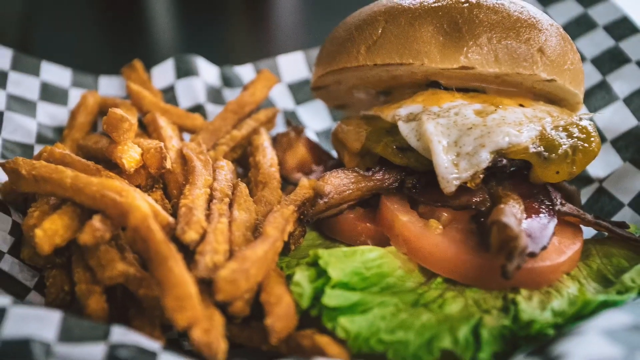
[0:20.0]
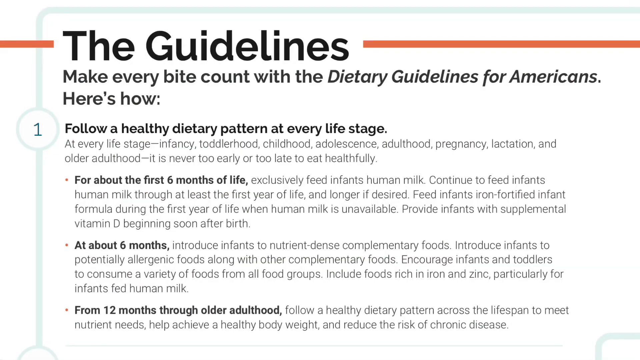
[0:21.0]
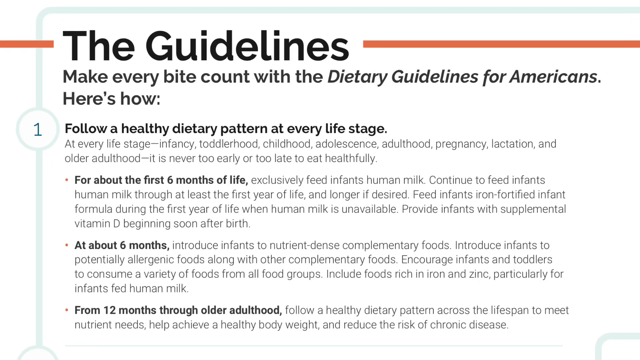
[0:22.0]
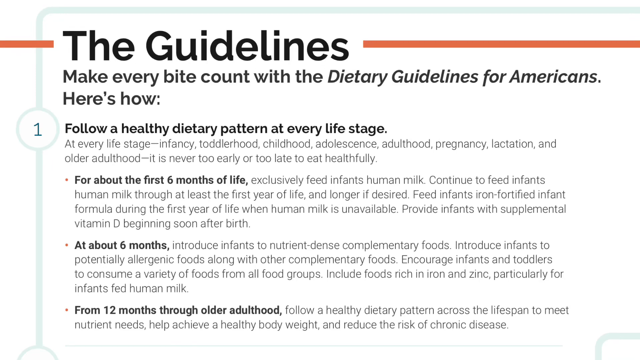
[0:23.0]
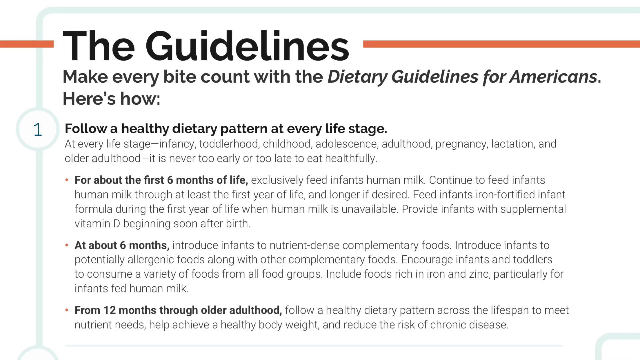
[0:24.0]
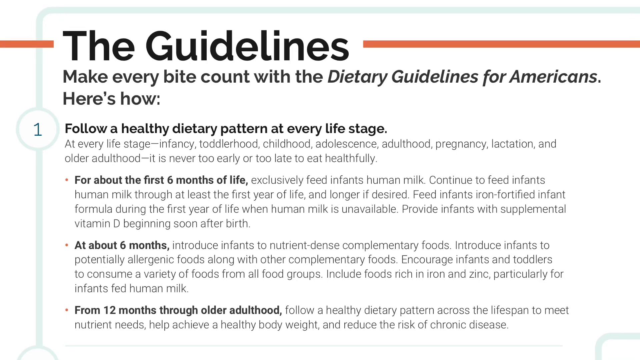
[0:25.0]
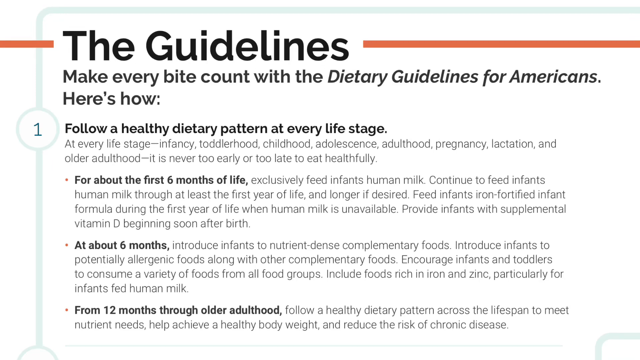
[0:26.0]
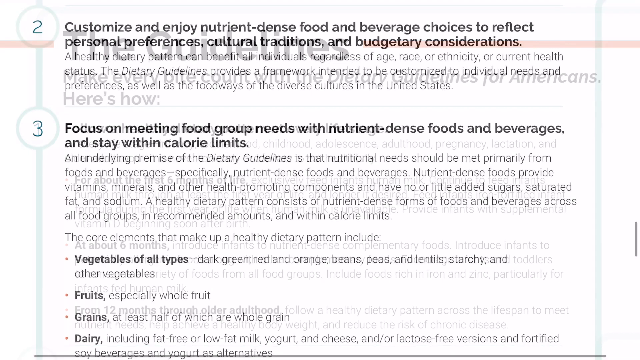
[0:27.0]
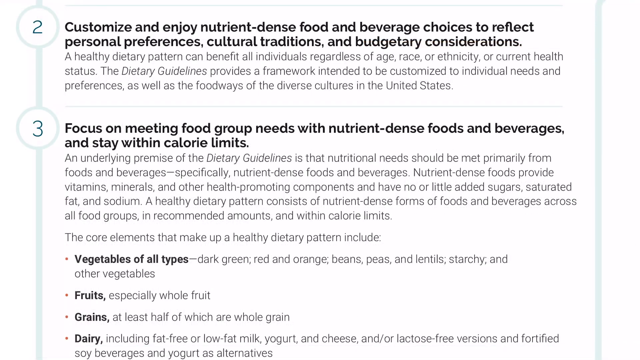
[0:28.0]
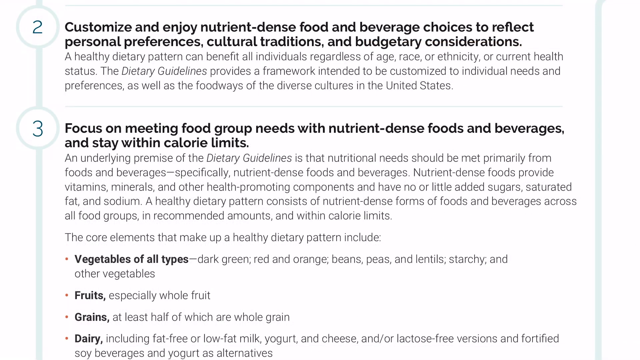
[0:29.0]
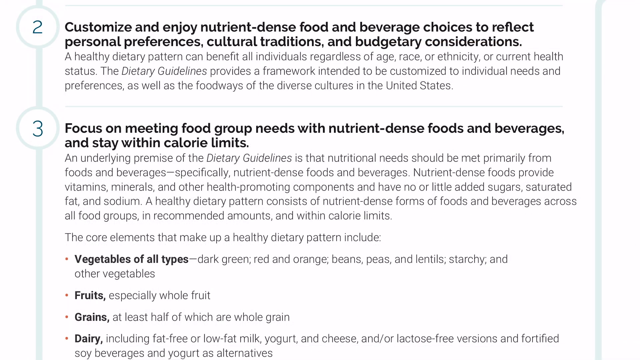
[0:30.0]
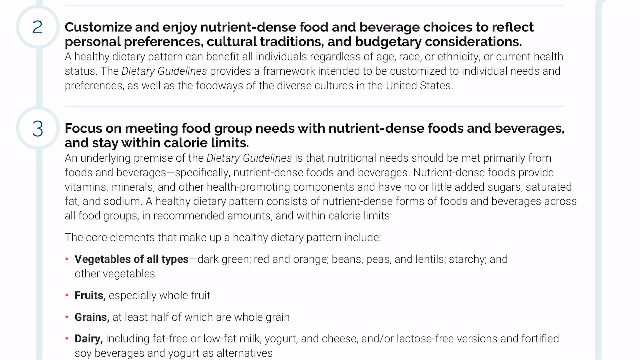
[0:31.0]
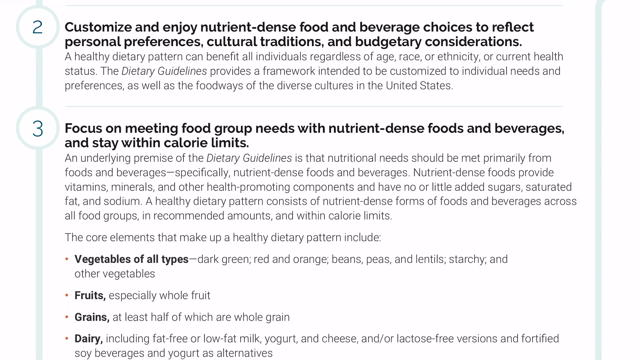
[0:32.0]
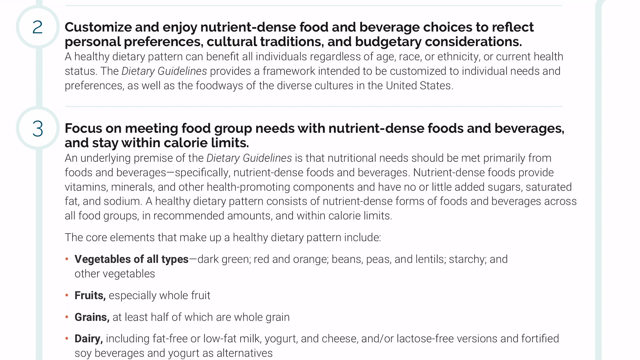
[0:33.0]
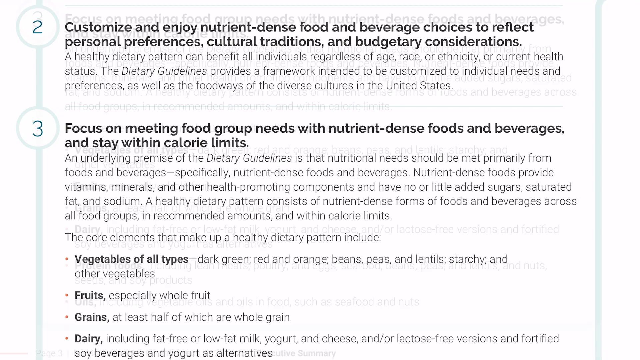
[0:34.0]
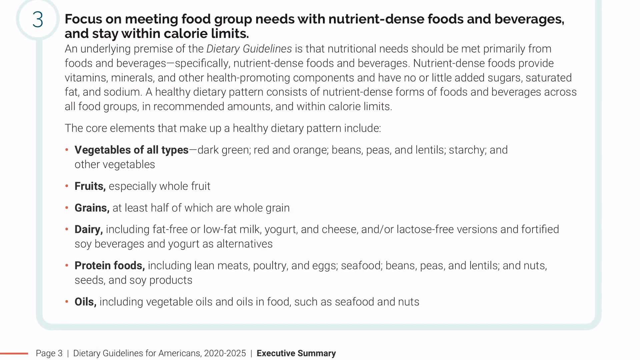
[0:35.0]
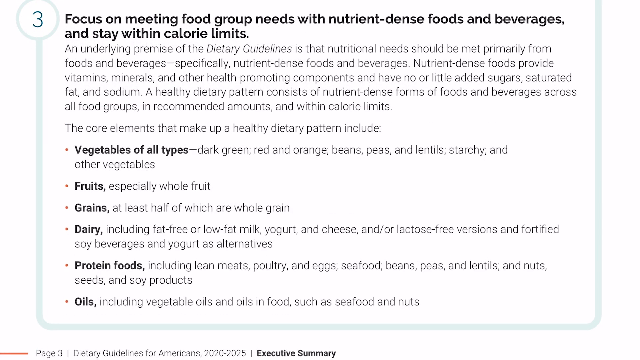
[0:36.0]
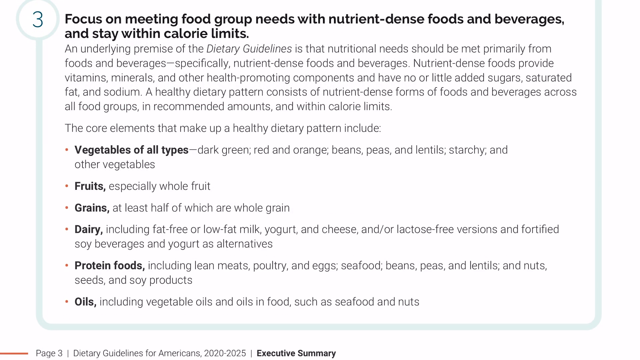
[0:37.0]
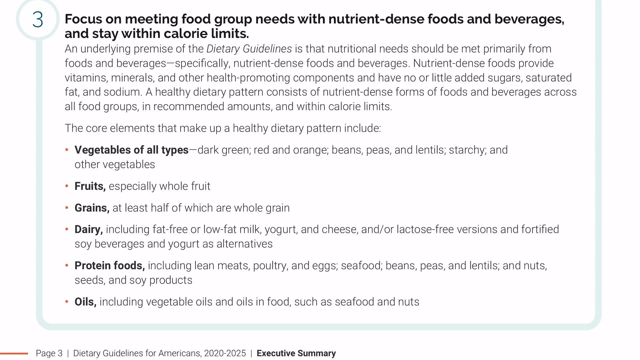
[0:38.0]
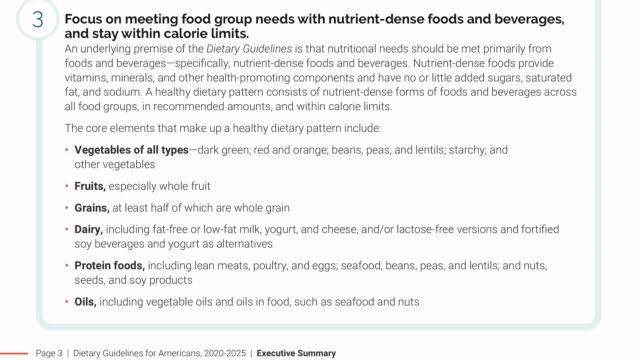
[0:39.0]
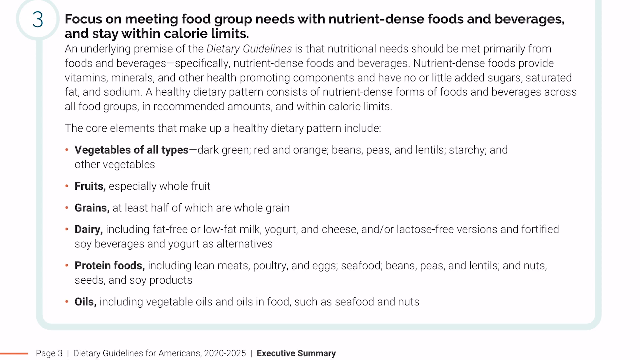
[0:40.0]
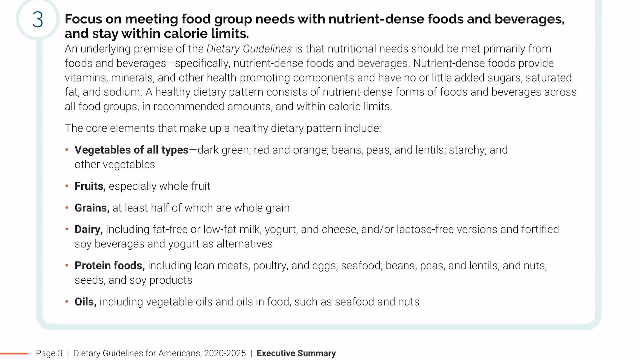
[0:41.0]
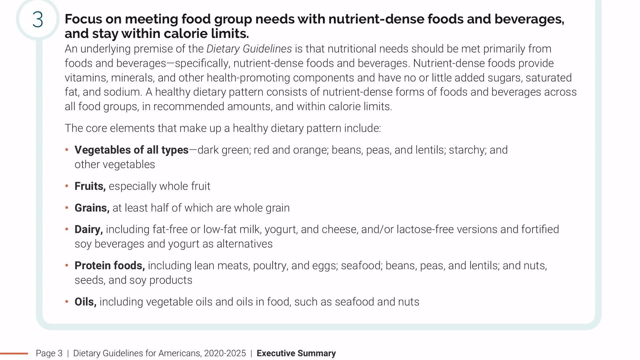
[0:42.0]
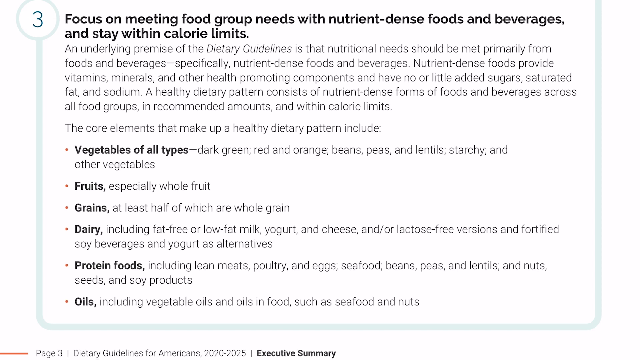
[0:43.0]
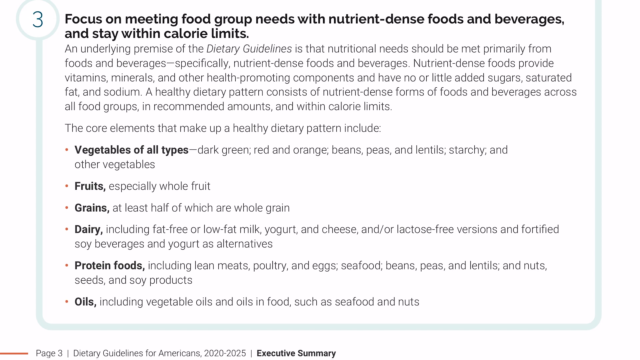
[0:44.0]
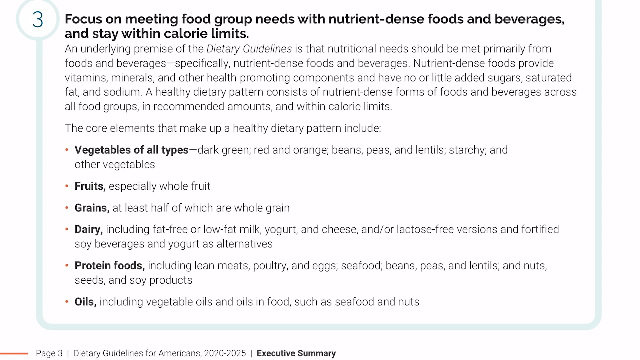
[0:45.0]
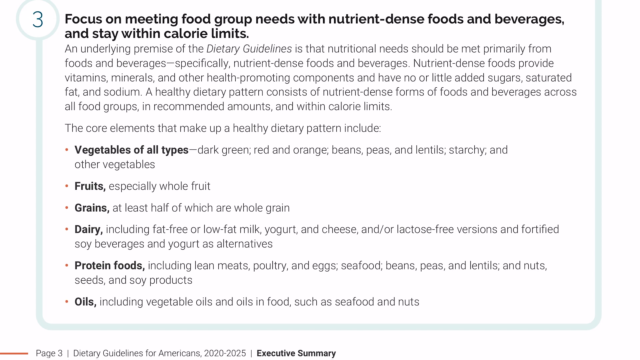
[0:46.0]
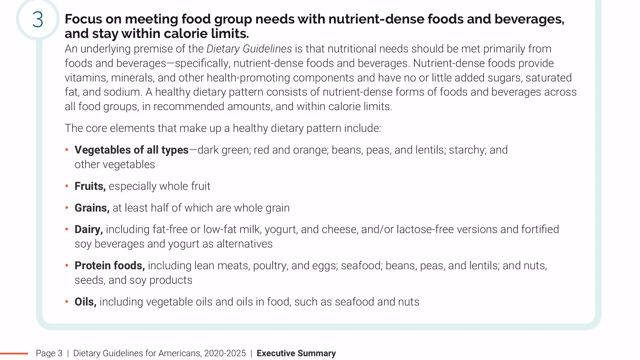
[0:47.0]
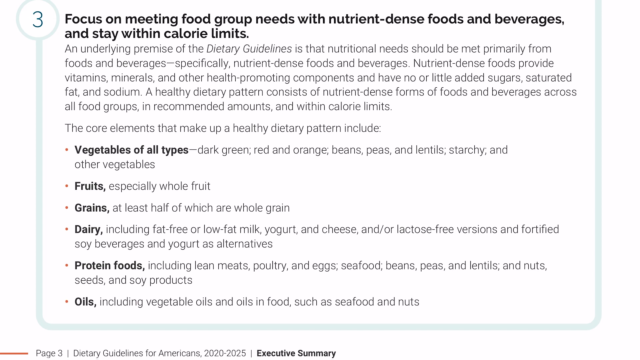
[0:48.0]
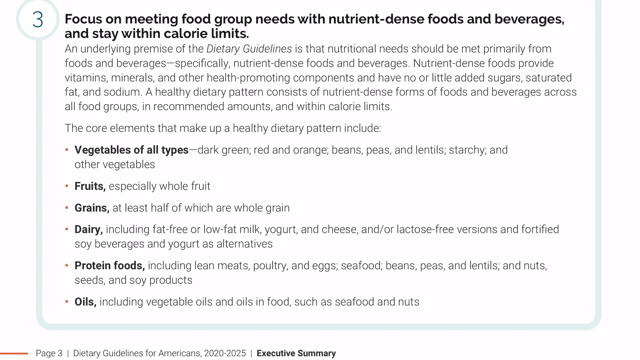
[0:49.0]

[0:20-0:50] A picture shows a large restaurant hamburger with lettuce, pickles, tomato and bacon; there is so much on the bun that the hamburger patty itself cannot be seen, and seasoned fries are next to the burger. The video then shows the guidelines, beginning with "Make every bite count with the dietary guidelines for Americans." Number one reads "follow a healthy dietary pattern at every life stage," followed by information on the first six months of life, exclusively human milk or formula, and that after about six months infants can start having other nutrient-dense foods. Step two reads "customize and enjoy nutrient-dense foods and beverages to reflect personal preferences, cultural traditions, and budgetary considerations." Next is "focus on meeting food group needs with nutrient-dense foods and beverages and stay within calorie limits," with a listing of vegetables of all types, fruits, grains, dairy, protein foods and oils as part of the healthy foods.